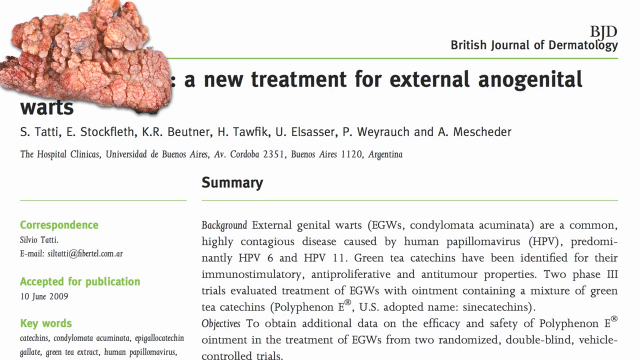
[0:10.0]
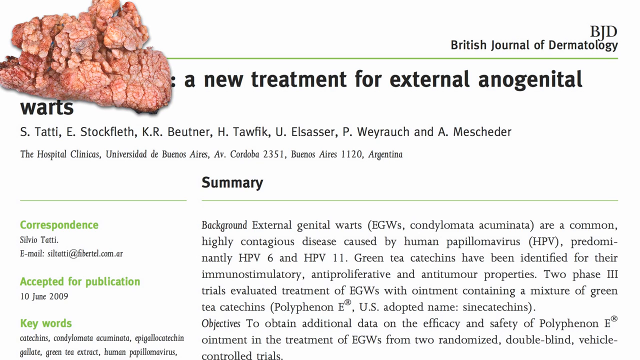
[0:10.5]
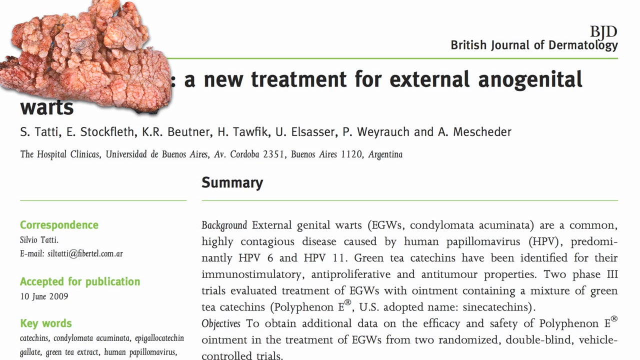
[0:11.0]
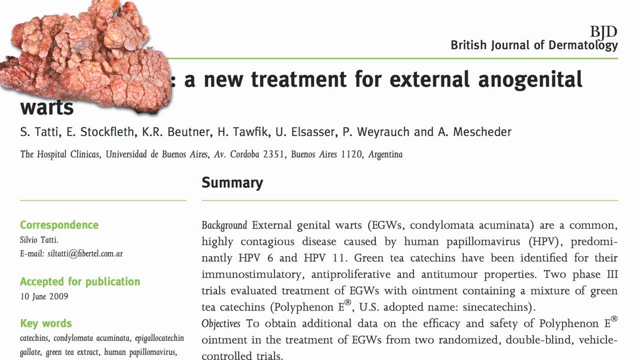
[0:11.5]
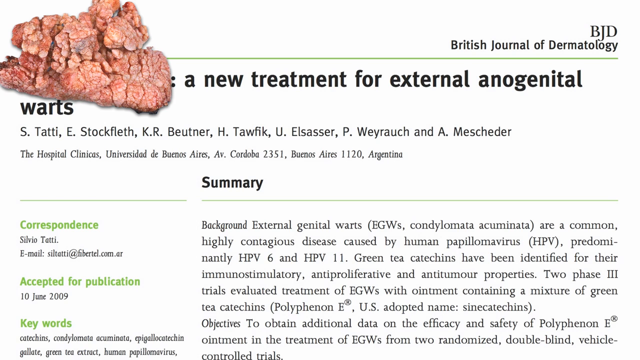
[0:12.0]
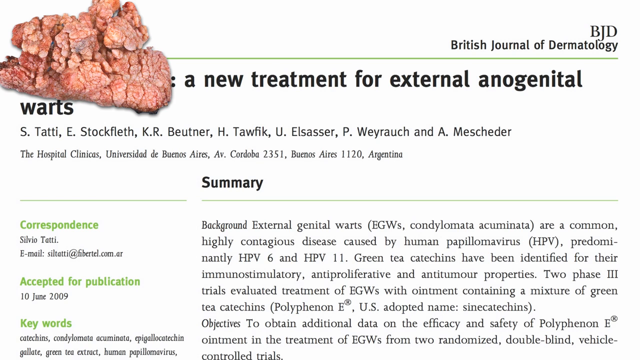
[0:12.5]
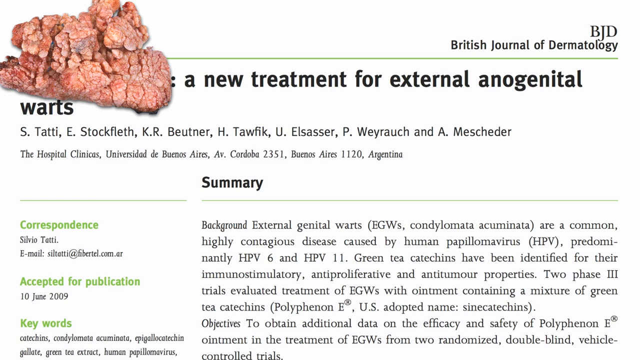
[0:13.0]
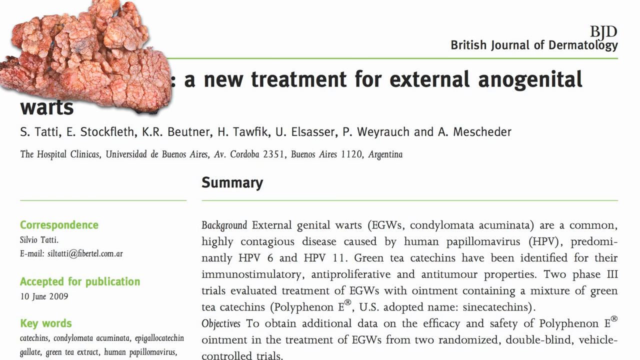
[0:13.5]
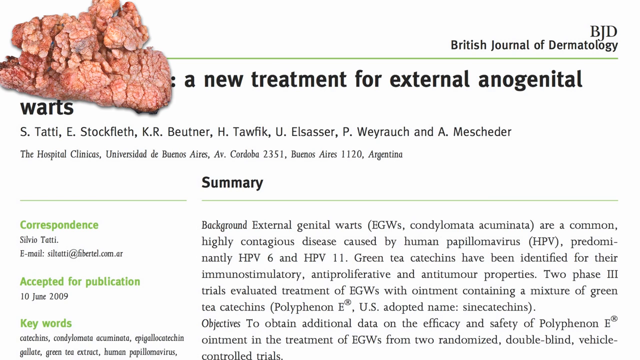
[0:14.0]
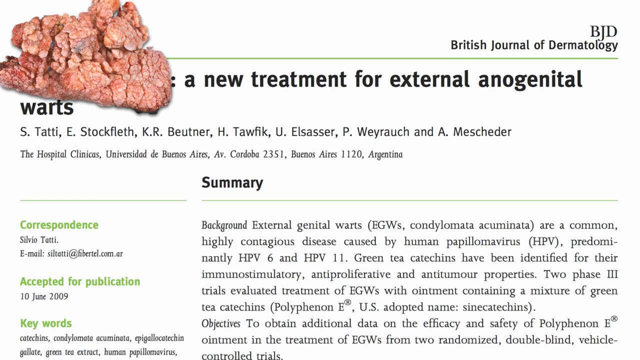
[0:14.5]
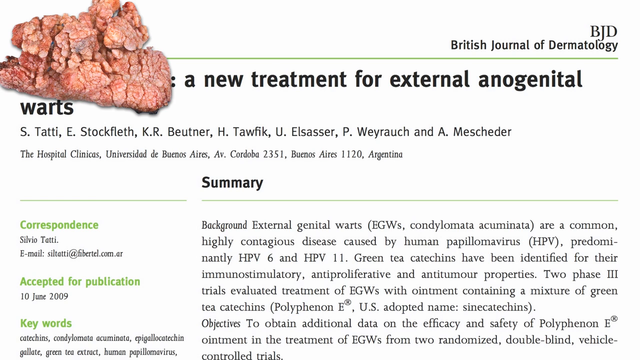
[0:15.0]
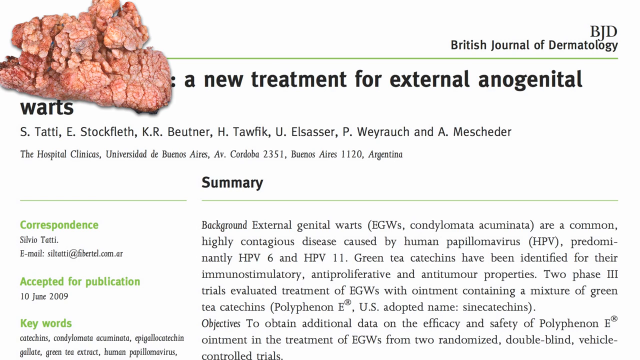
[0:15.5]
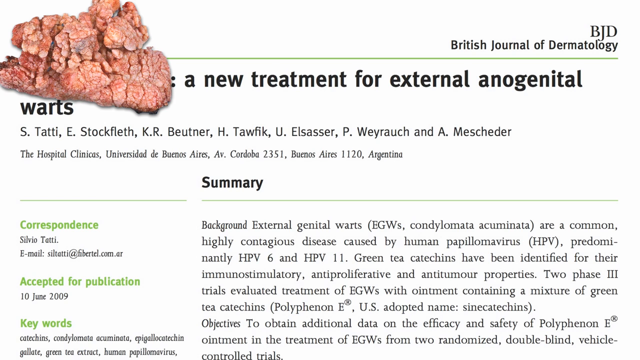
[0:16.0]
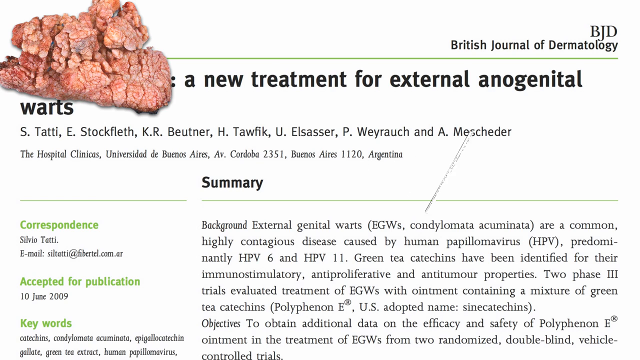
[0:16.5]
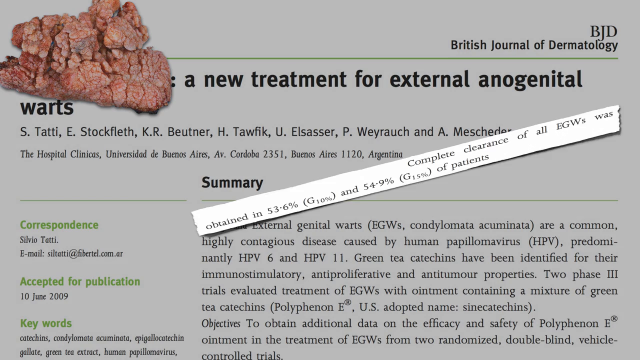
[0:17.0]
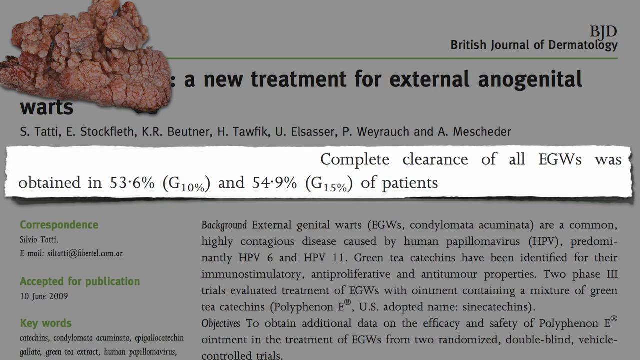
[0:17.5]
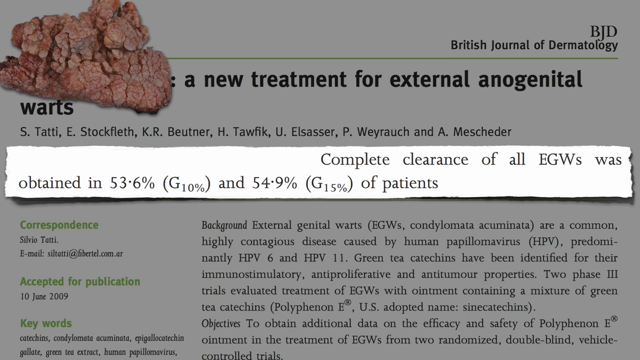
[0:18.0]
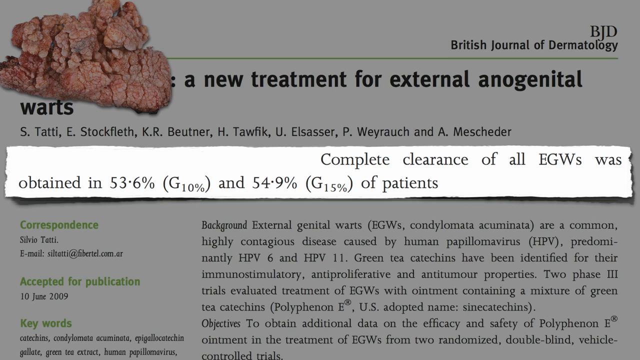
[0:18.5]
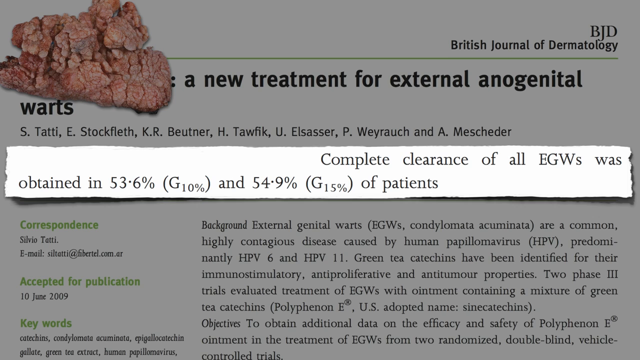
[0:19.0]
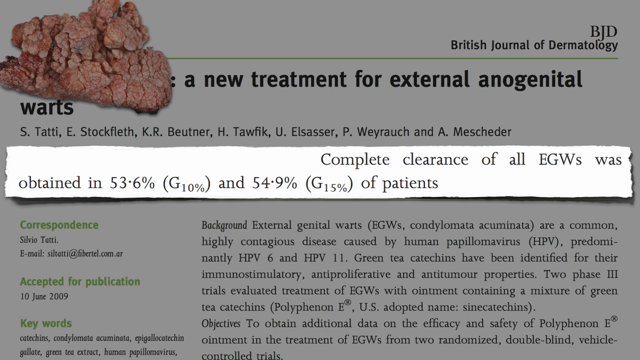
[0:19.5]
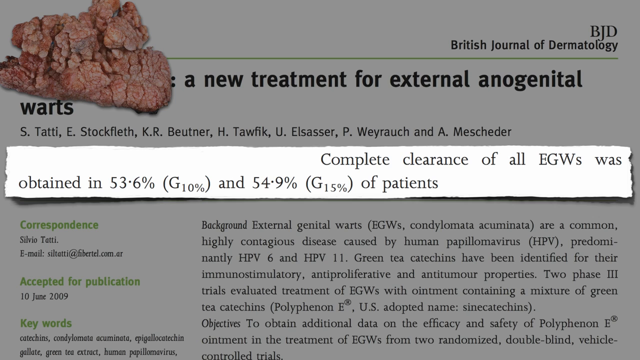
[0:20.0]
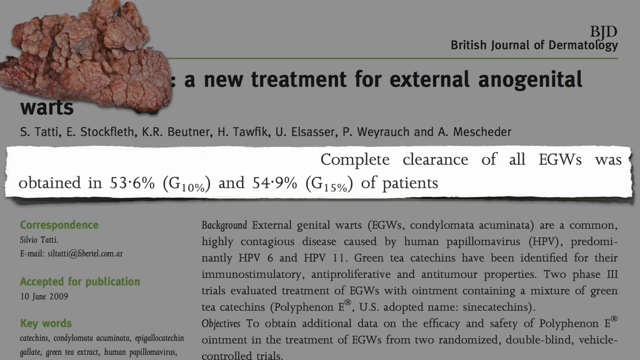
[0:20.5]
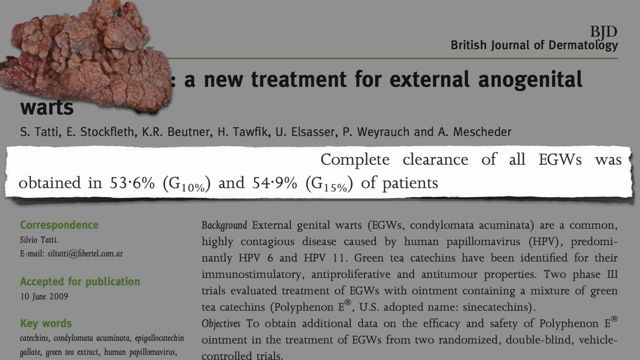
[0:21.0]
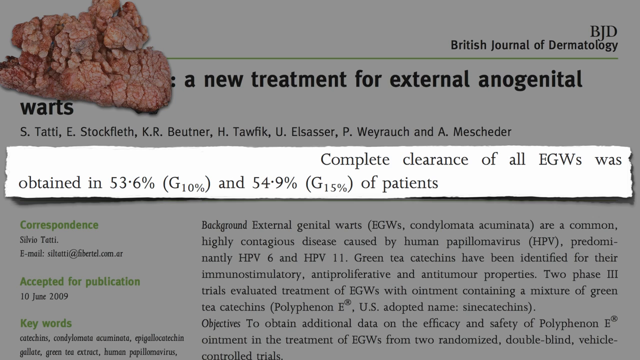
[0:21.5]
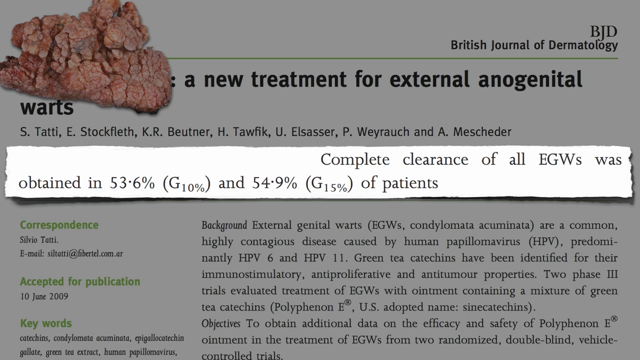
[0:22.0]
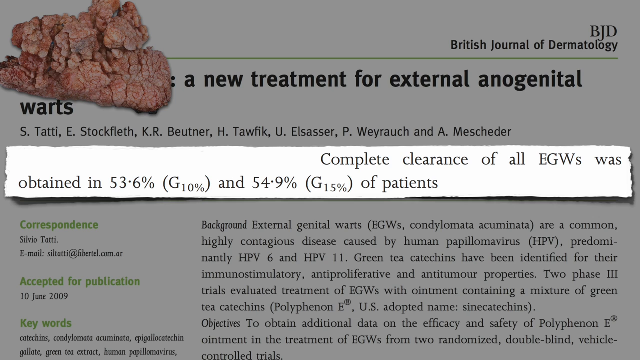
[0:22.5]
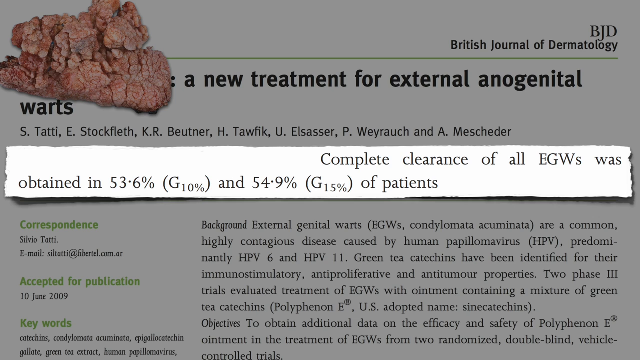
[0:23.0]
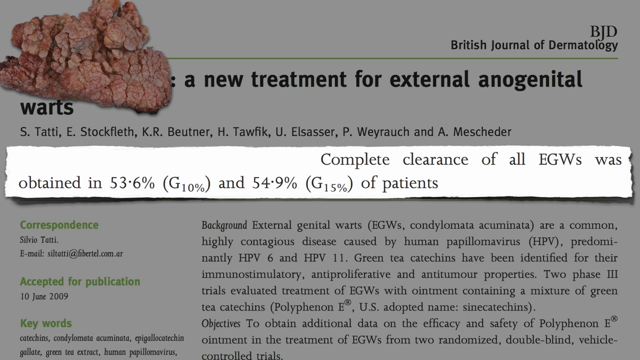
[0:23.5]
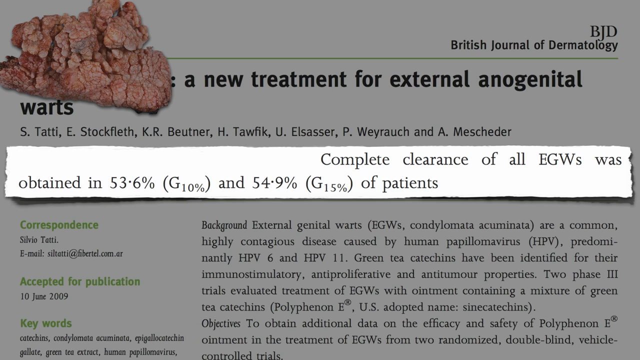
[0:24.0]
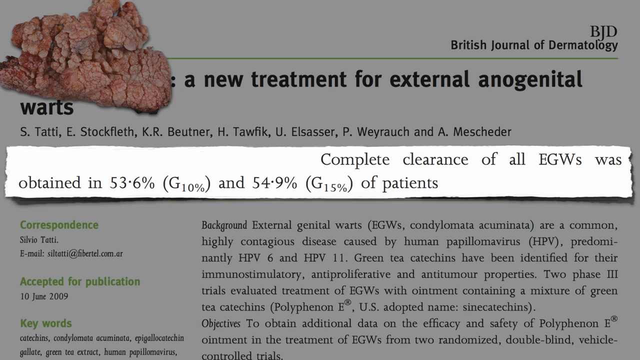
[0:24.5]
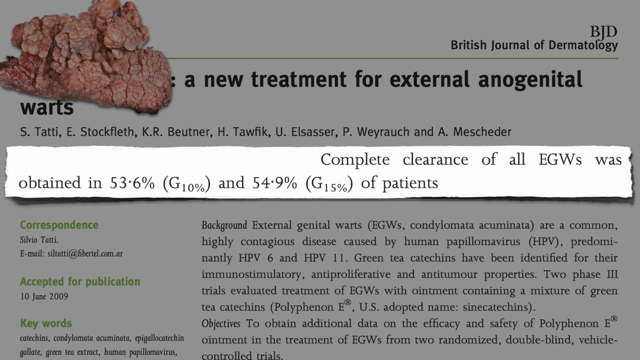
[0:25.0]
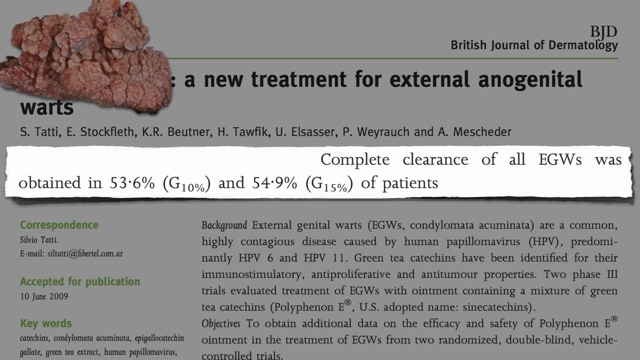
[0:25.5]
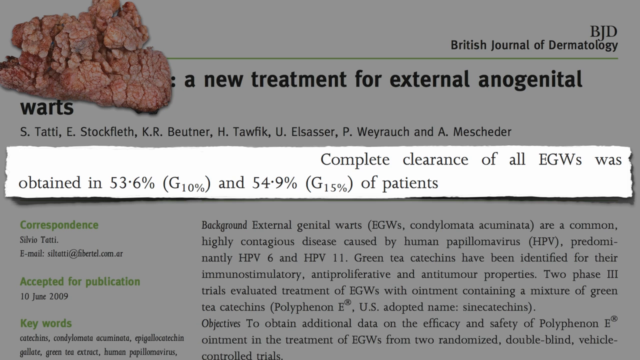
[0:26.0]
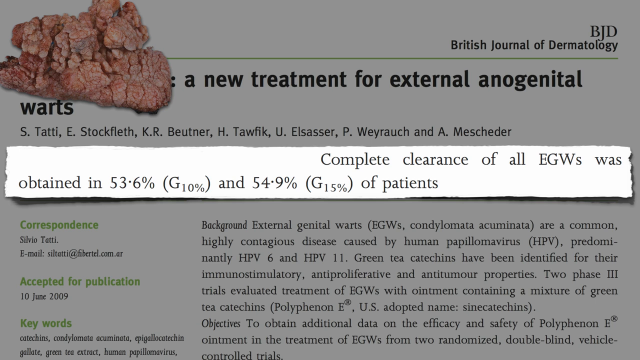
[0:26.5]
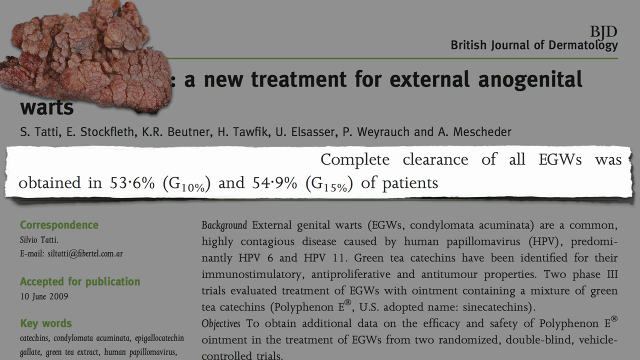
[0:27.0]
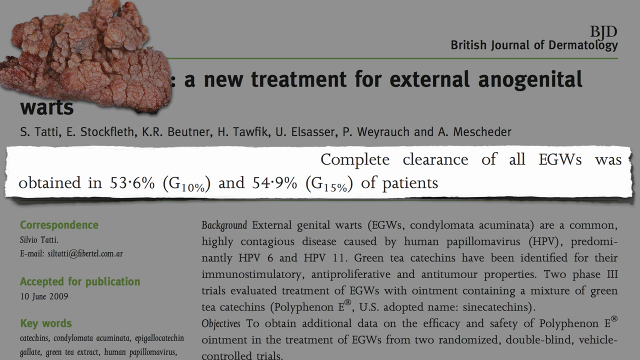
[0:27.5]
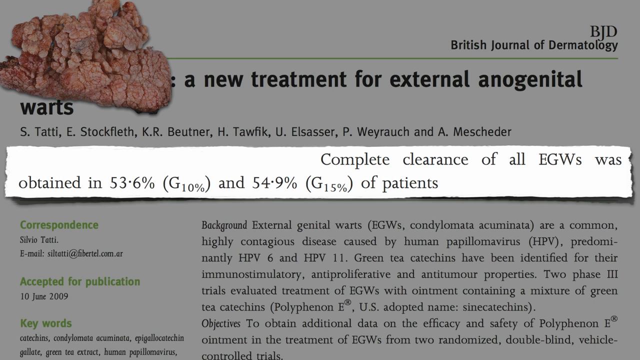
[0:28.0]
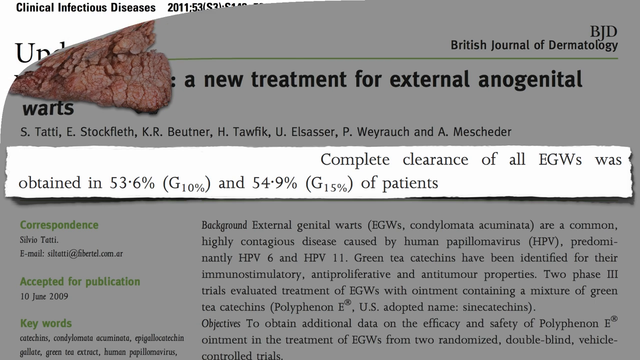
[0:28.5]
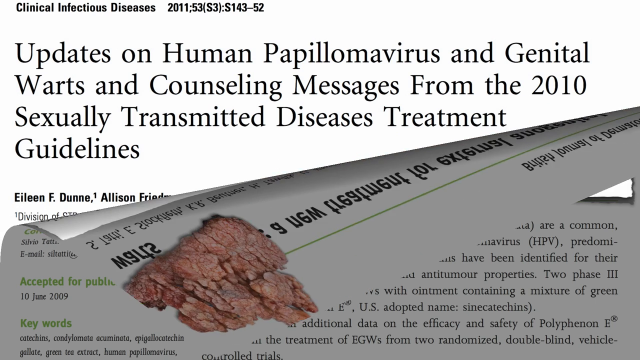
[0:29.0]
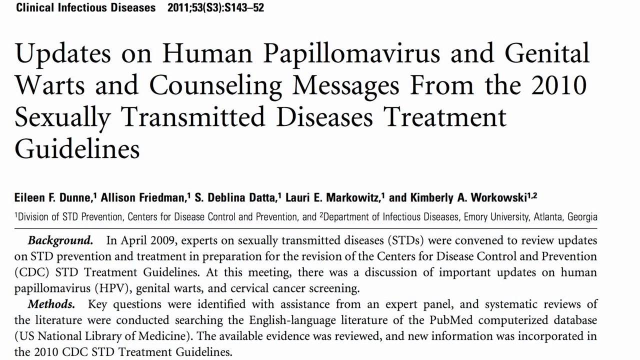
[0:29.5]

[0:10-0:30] The genital warts image remains in the top left part of the frame. A quote then appears in the middle of the screen, styled as if it were a piece of paper torn from the article. It reads, "Complete clearance of all EGWs was obtained in 53.6% and 54.9% of patients." The quote is long, reaching from the left to the right side of the frame, but skinny because it is a short sentence. The whole screen then peels away from the top left corner to reveal a different article titled "Updates on Human Papillomavirus and Genital Warts and Counseling Messages from the 2020 Sexually Transmitted Diseases Treatment Guidelines." Like the first article, it shows the authors, the journal, the background, and some of the methods. It is part of the Clinical Infectious Diseases journal and is from 2011.